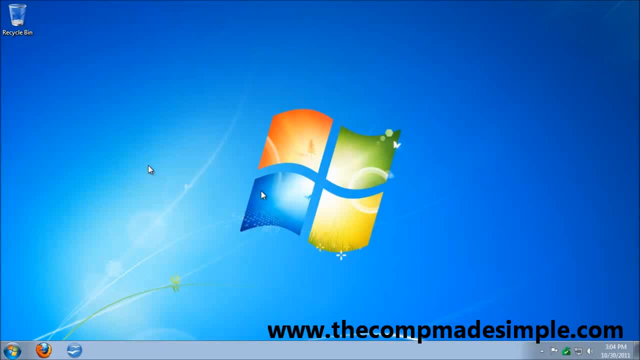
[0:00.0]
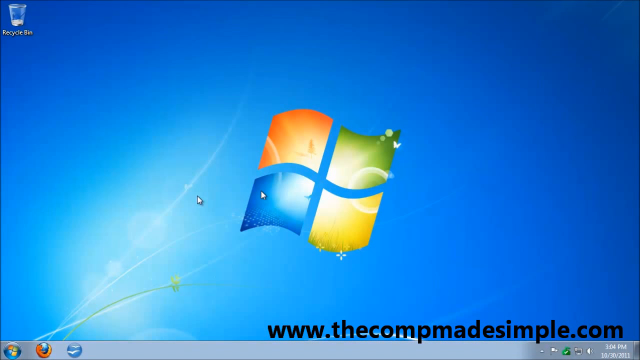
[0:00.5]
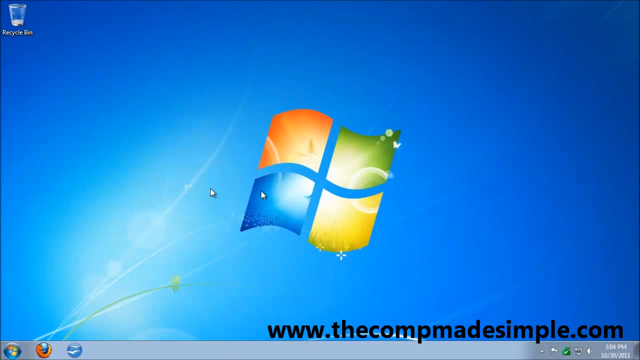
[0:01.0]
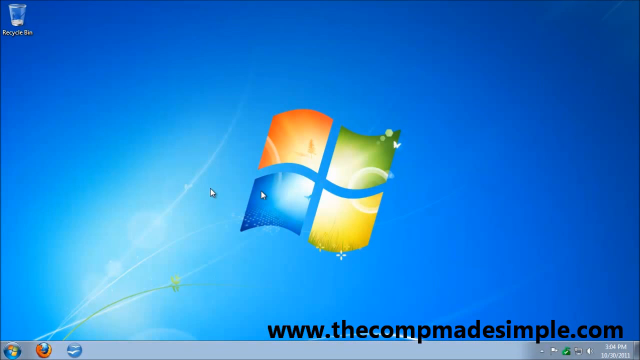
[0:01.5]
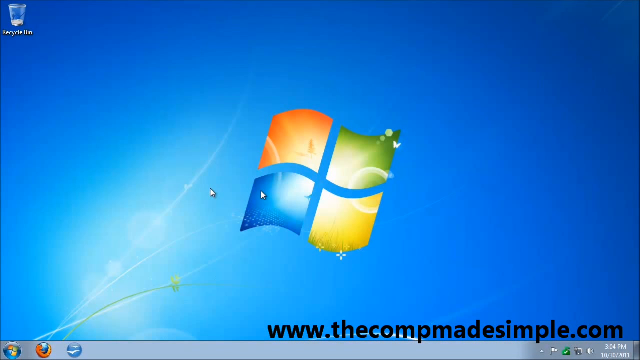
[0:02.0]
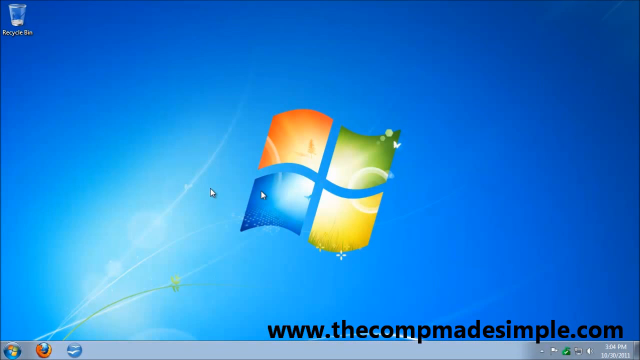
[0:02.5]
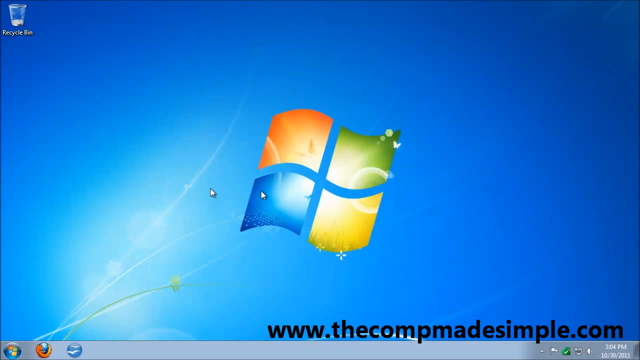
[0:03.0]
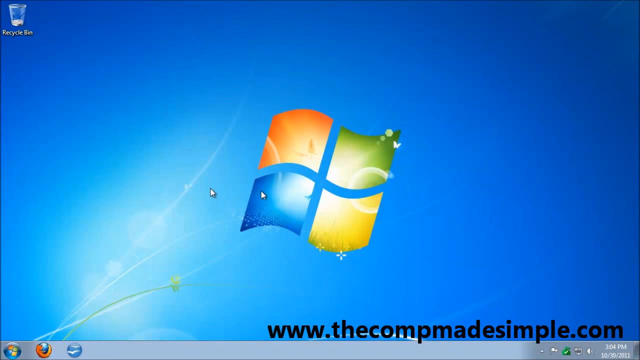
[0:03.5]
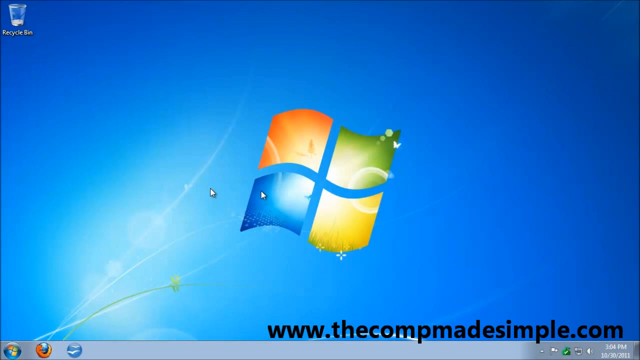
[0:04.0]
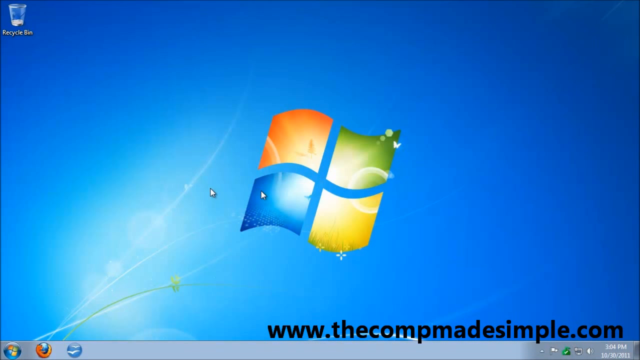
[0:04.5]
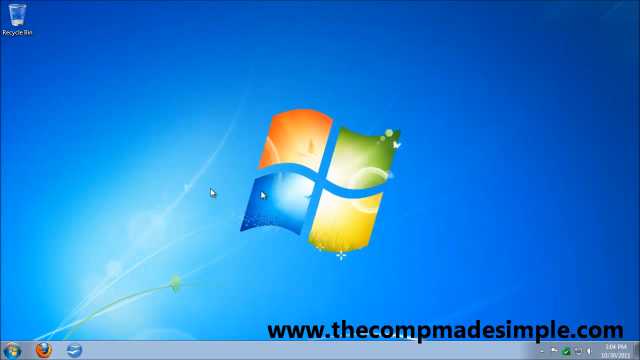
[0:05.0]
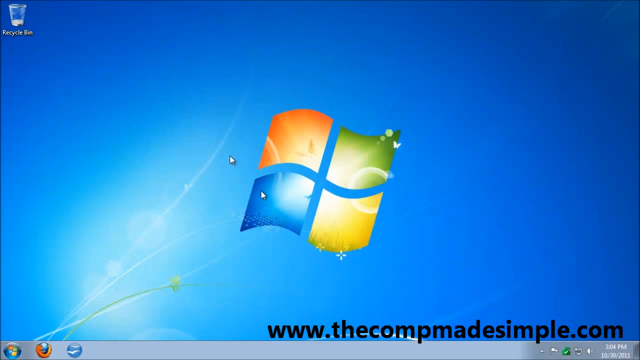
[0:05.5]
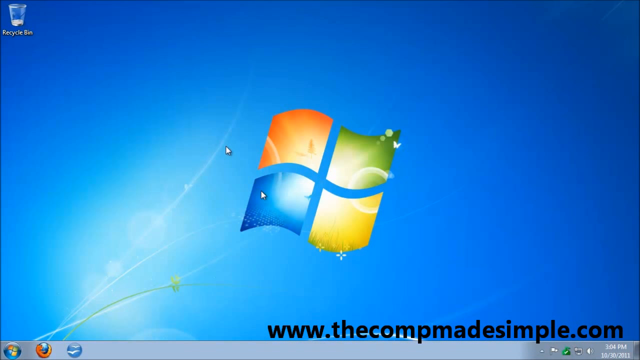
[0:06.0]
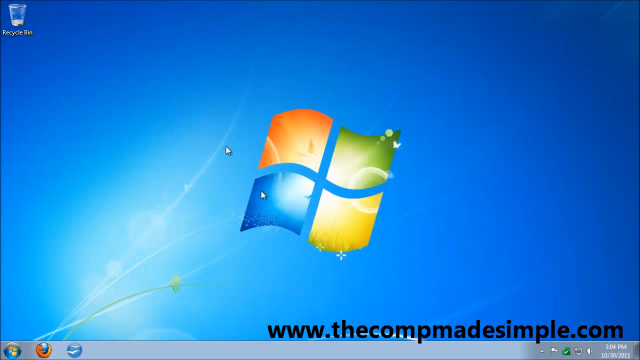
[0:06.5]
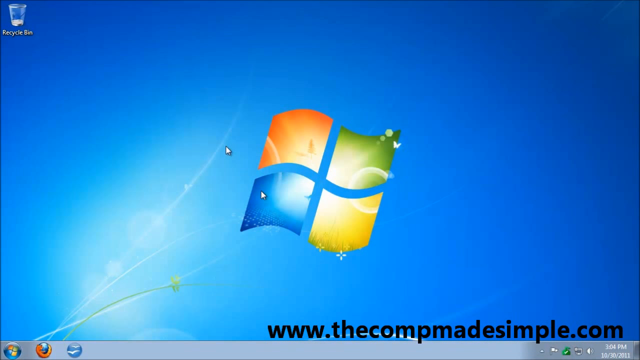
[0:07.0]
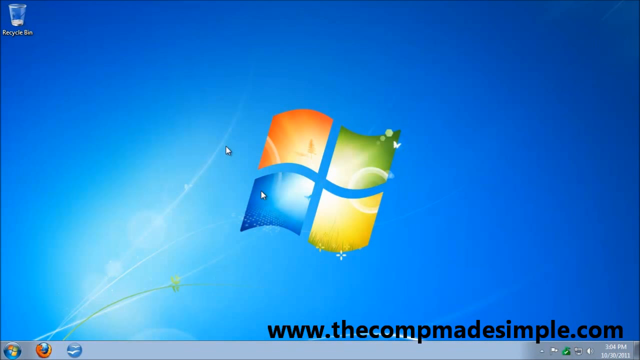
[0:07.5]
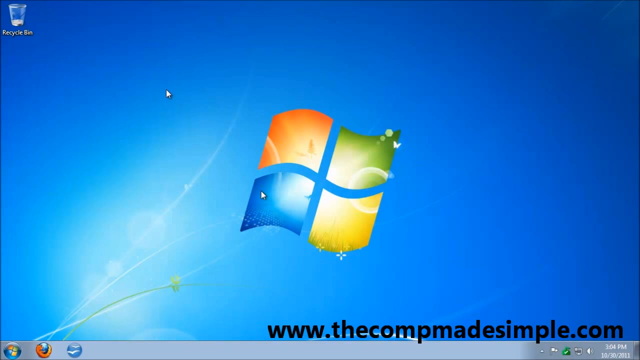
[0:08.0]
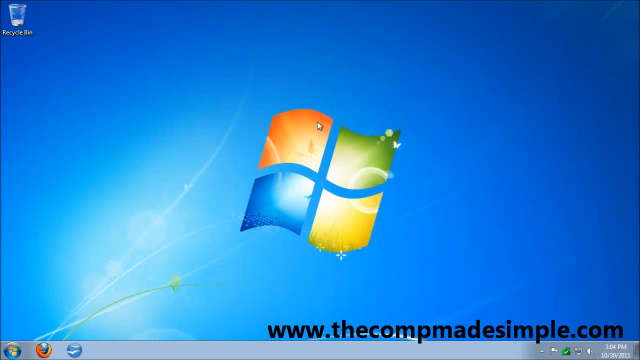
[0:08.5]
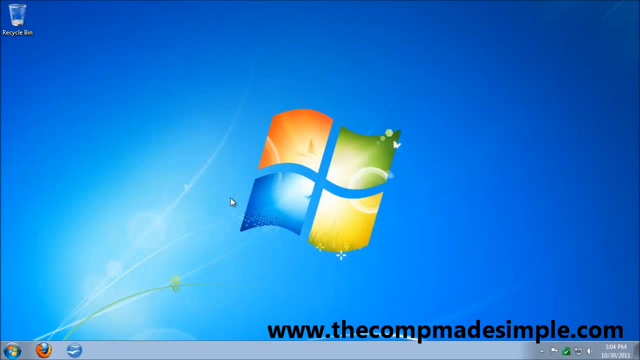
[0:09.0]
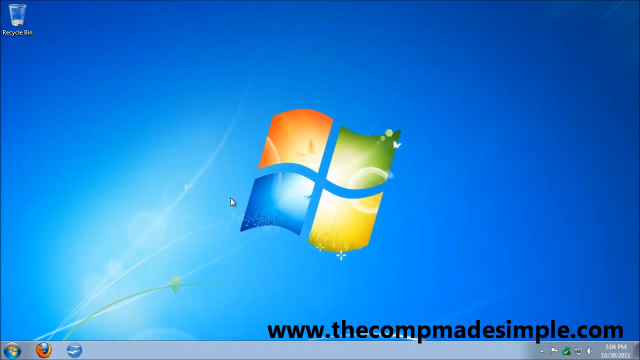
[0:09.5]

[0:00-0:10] A Windows desktop shows the Windows logo in the center of the screen and the recycle bin in the upper left corner. In the lower right corner is a website link that reads "www.thecompmadesimple.com". There are two different mouse pointers, and one of them moves around the screen. Eventually the first pointer disappears and the second one begins to move around. The two pointers apparently move independently, as if two different mice were hooked up to the computer. The screen is otherwise simple, with just the Windows logo in the center.